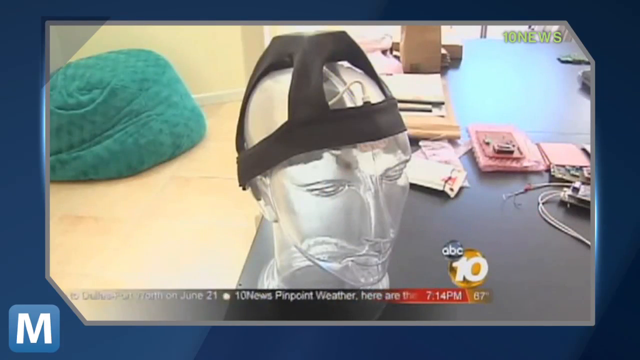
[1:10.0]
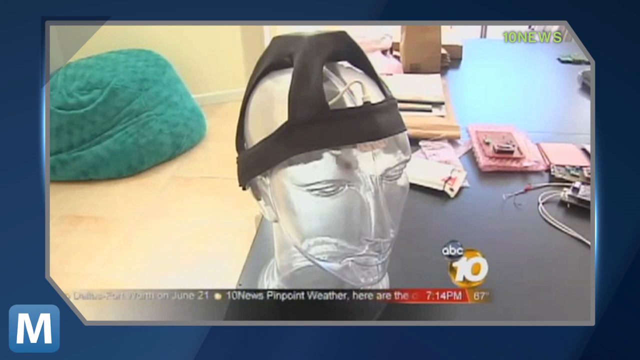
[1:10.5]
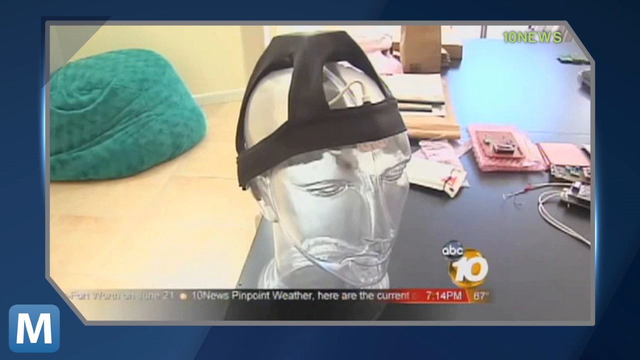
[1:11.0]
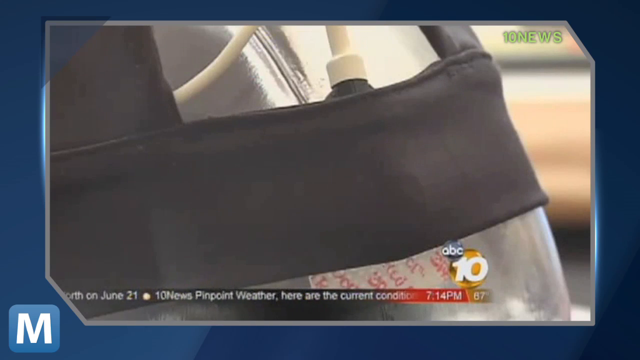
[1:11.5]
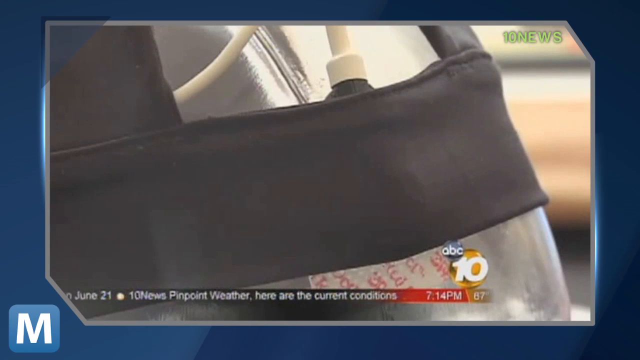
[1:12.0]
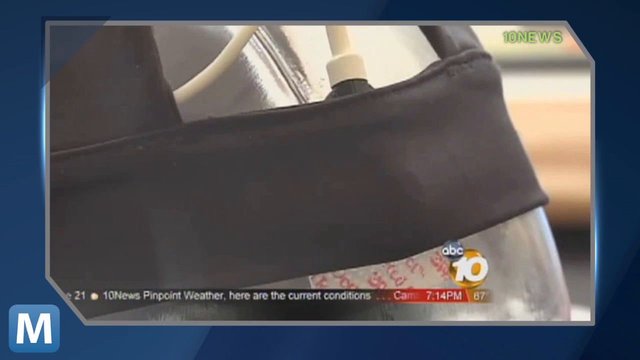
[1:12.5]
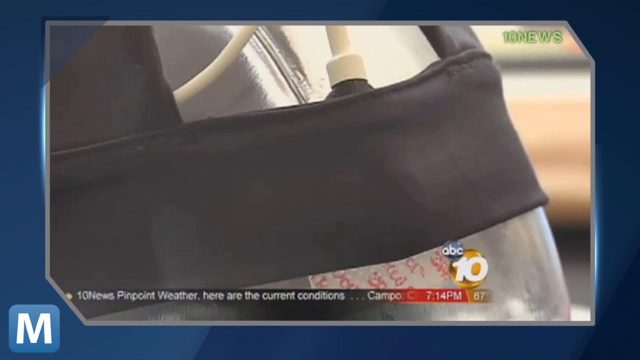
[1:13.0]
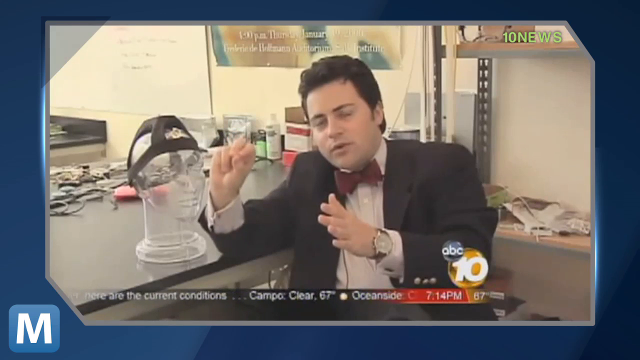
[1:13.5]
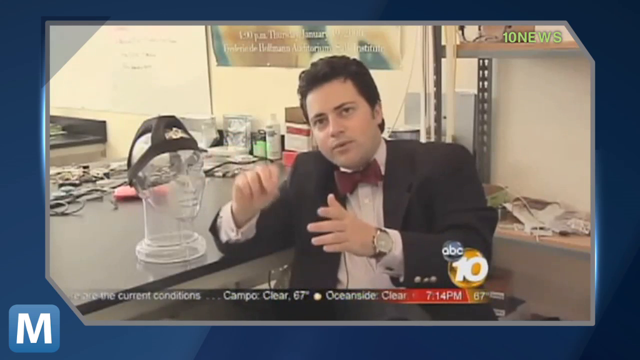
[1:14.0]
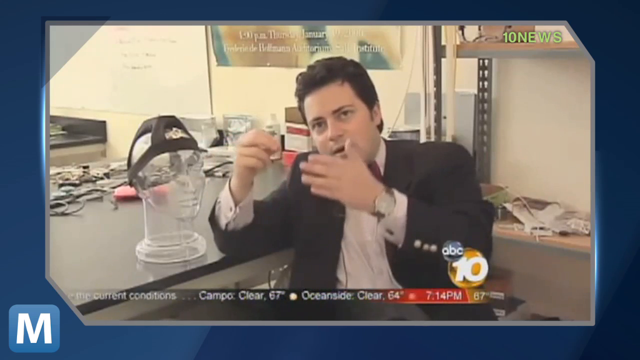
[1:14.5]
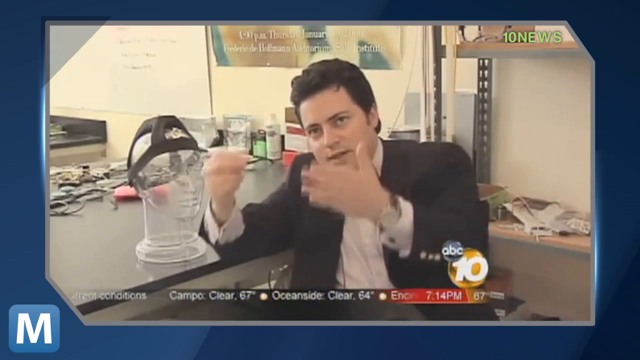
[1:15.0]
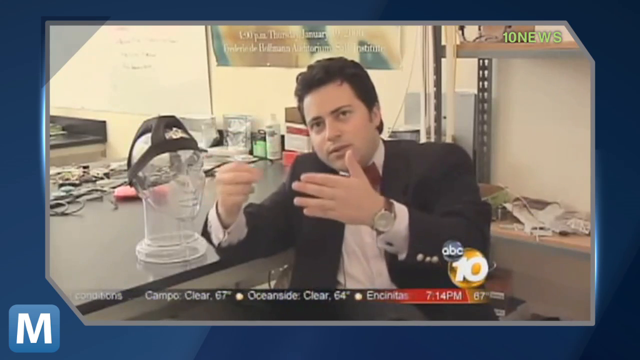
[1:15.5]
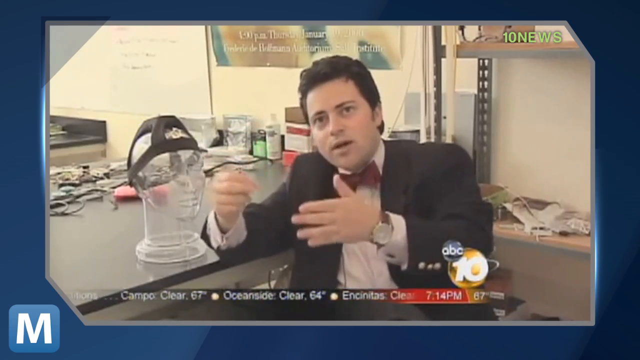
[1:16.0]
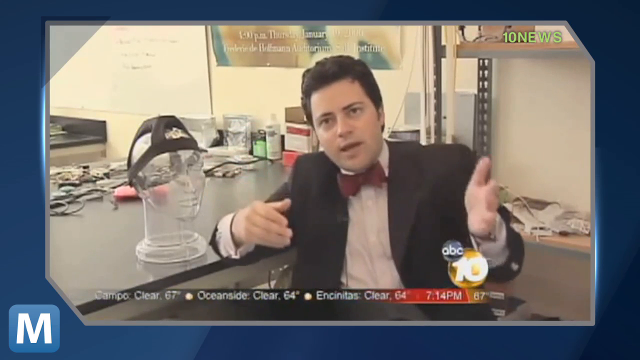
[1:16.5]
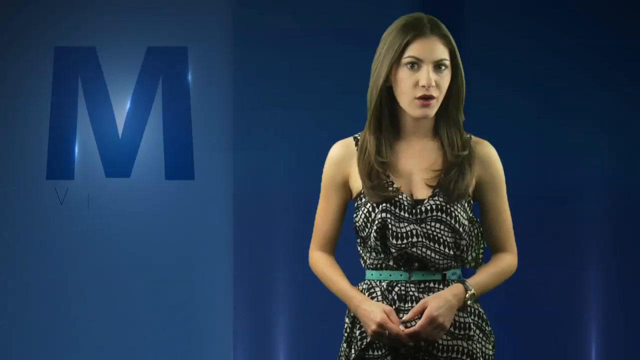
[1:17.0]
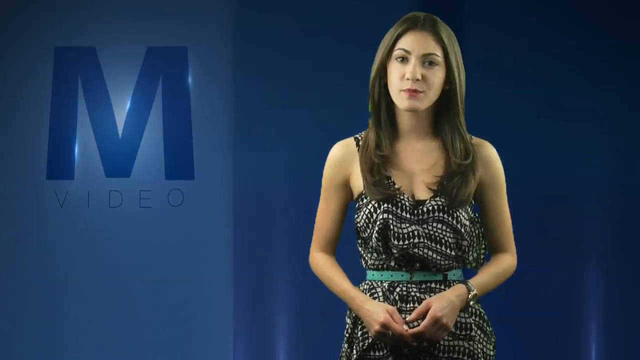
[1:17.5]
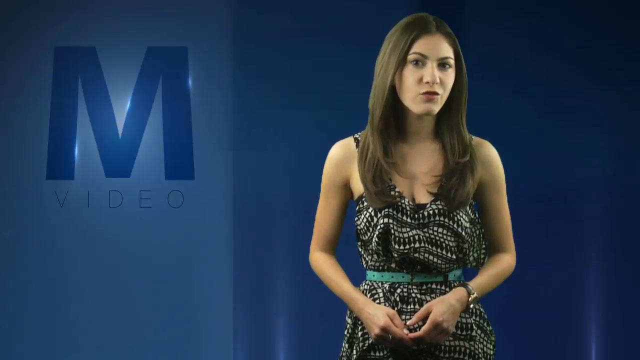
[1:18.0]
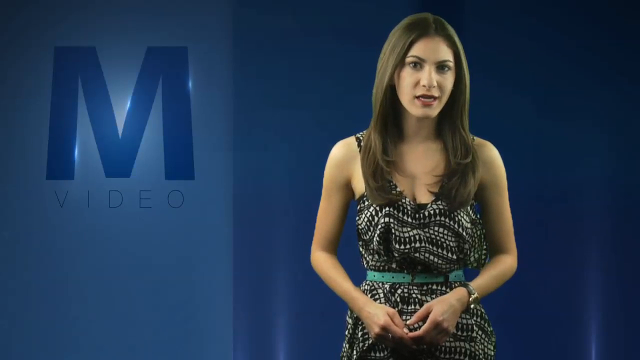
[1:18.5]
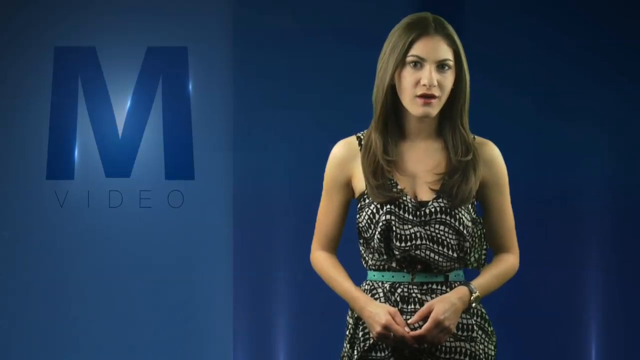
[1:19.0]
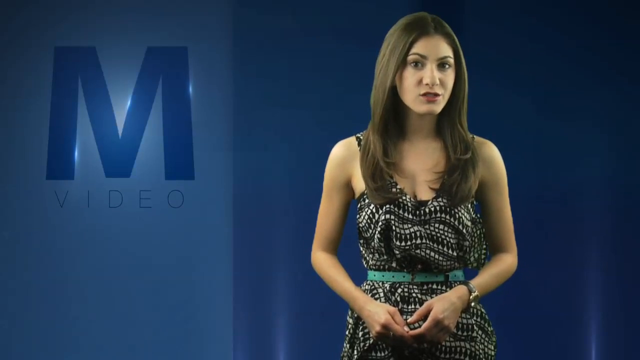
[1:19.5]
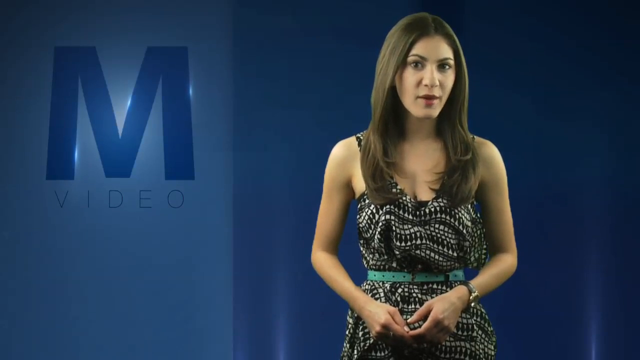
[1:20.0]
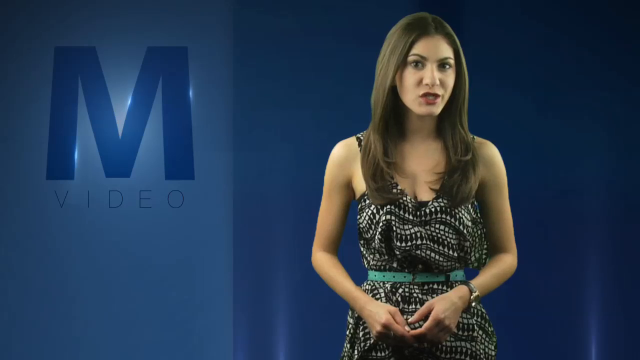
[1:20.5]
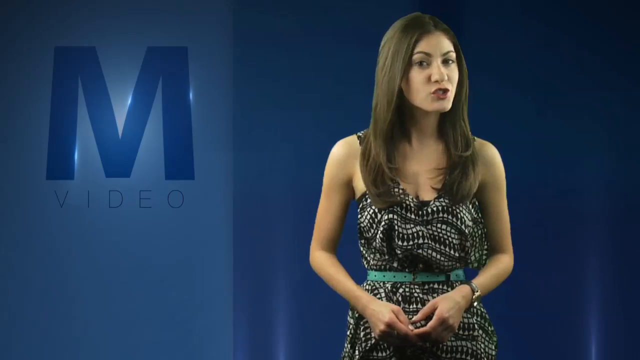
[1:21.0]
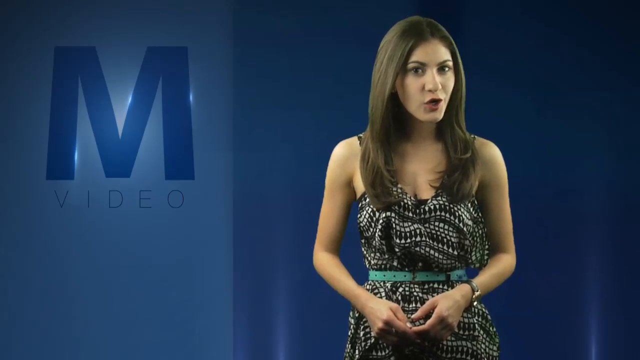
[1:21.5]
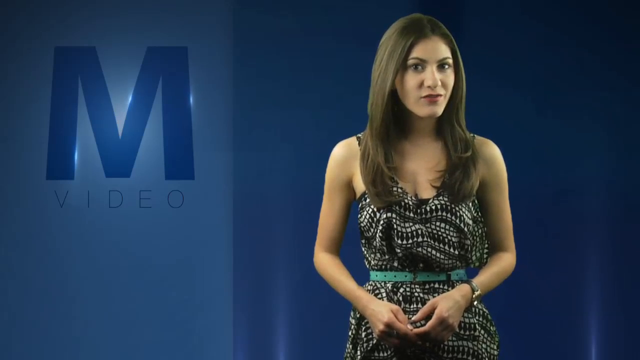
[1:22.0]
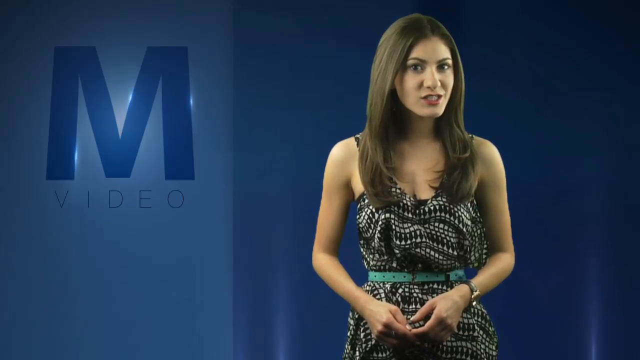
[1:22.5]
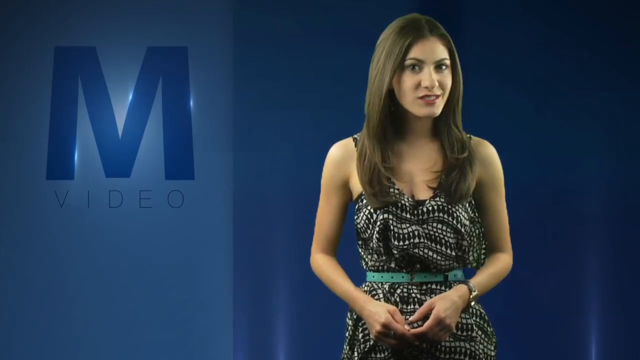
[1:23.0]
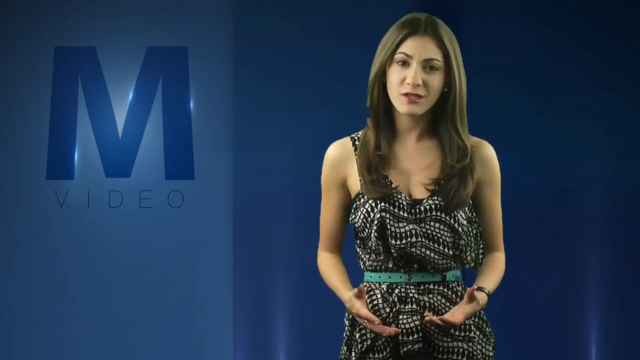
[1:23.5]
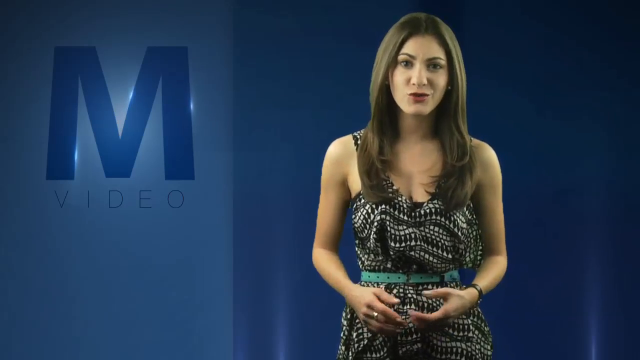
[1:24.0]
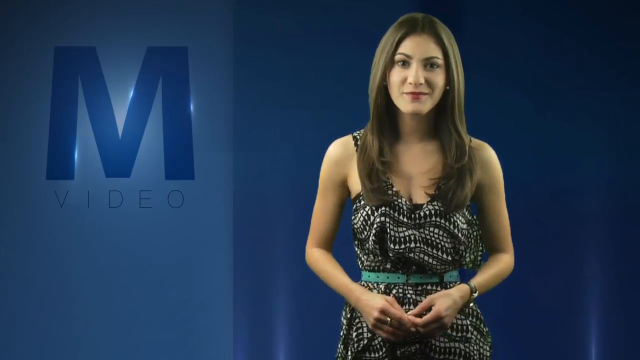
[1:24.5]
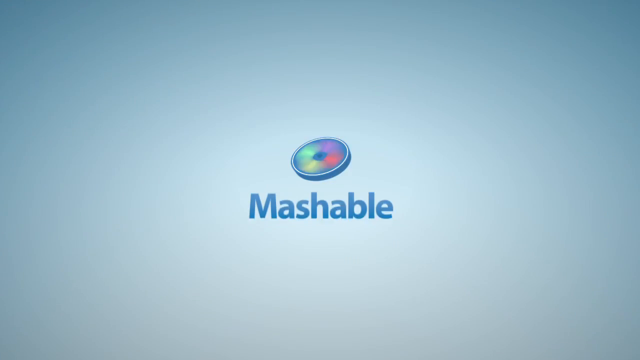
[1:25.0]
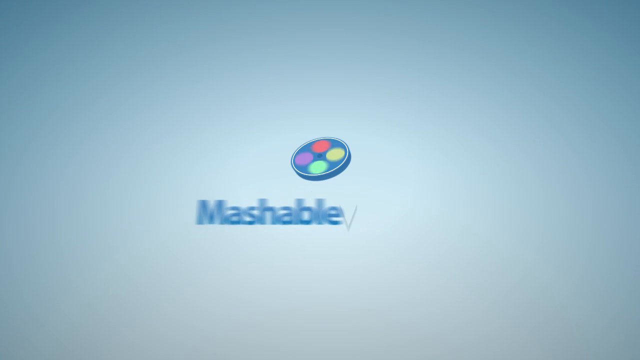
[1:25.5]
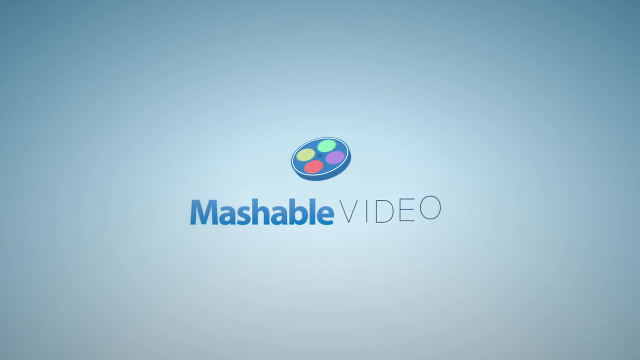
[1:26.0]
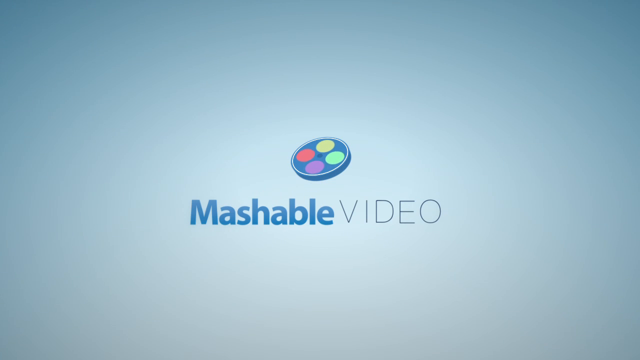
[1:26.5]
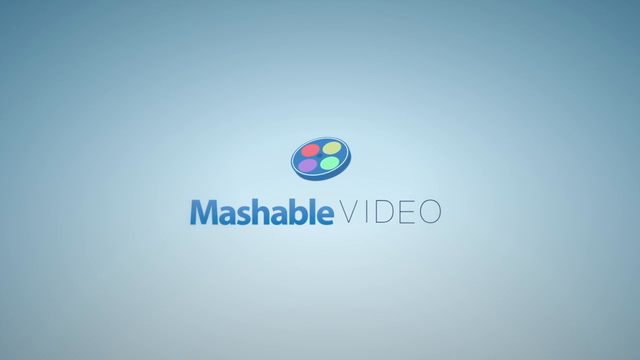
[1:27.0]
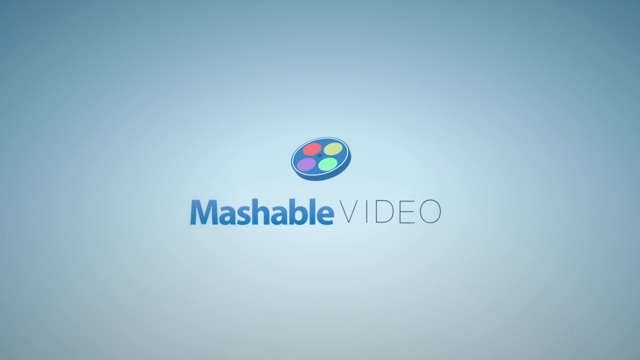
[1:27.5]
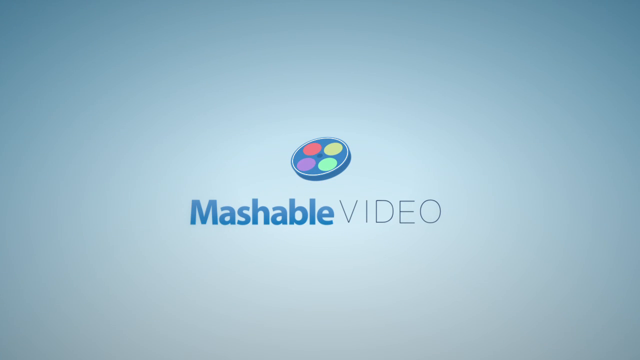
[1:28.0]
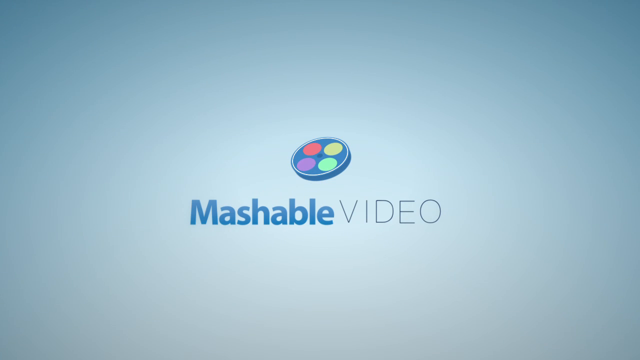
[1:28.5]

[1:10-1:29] A transparent fake head wears a black strappy cap with a visible white wire; this is the portable brain scanning device being advertised. The head appears to be sitting on a table. The image is from a news clip, with a news chyron for ABC 10 at the bottom of the screen. Behind the head on the table there appear to be standard office supplies and a few electronic pieces and parts. On the left-hand side of the screen, a green bean bag is on the floor in one corner of the room. The camera cuts to a close-up of the wire attached to the hat, then to a man in a suit and bow tie, wearing a watch, sitting next to the hat model. He leans on the desk with his elbow next to the fake head and speaks into the camera for about two seconds. The scene then cuts back to the woman standing in the studio in front of the blue background, speaking into the camera. In the last three seconds, a blue disc tilted slightly away from the camera appears over a blue background, with purple, red, green and yellow circles on it. The disc begins to spin, and the words "Mashable Video" appear, bouncing in from the bottom of the screen, "Mashable" in bold blue font and "Video" in thin gray font.